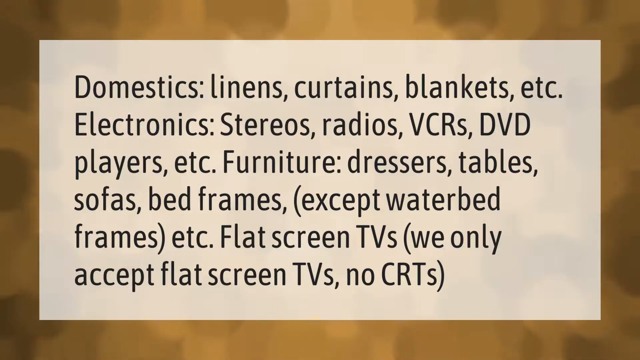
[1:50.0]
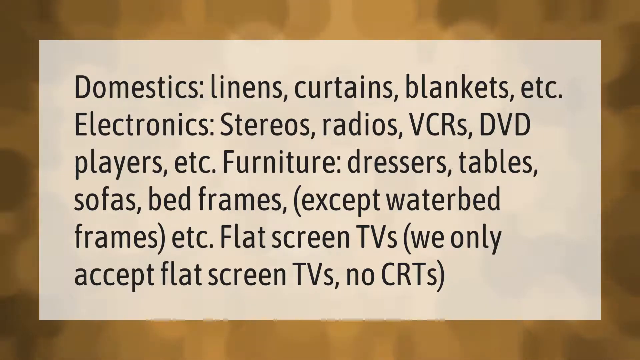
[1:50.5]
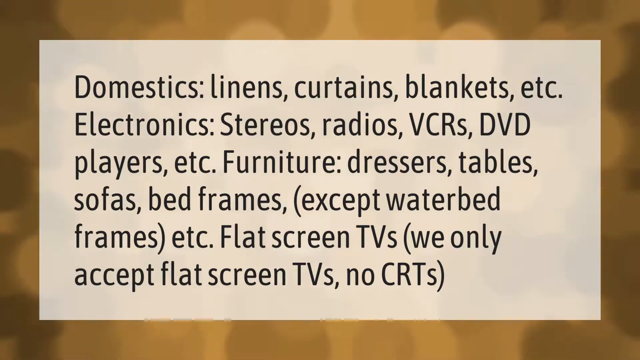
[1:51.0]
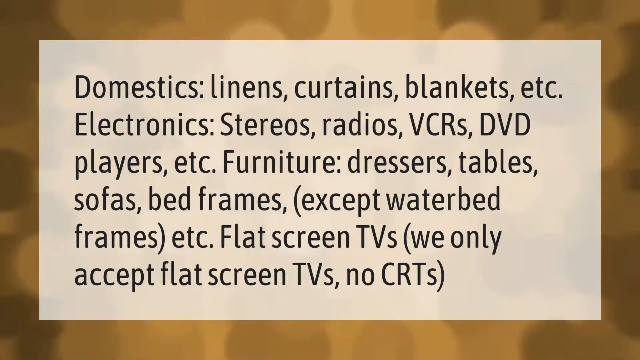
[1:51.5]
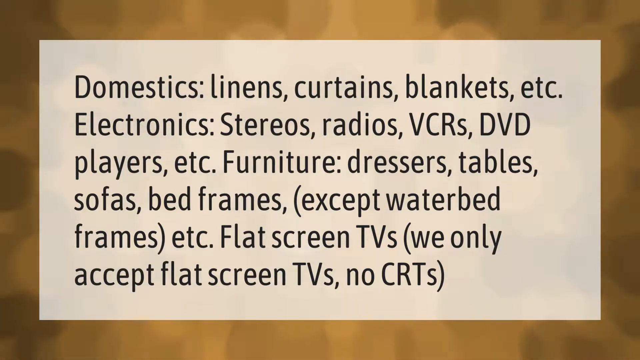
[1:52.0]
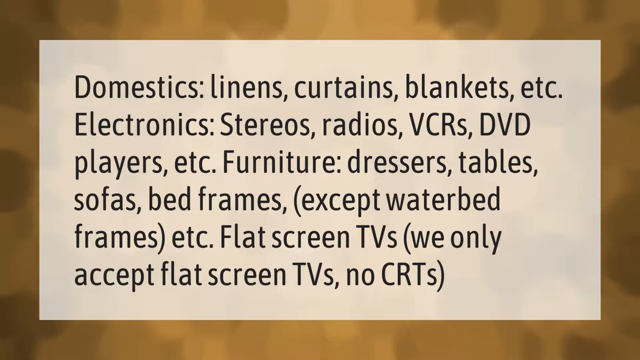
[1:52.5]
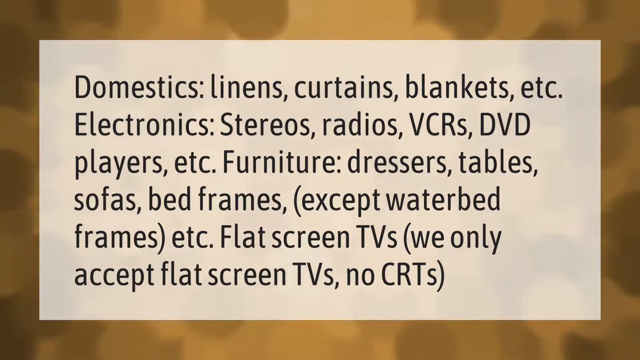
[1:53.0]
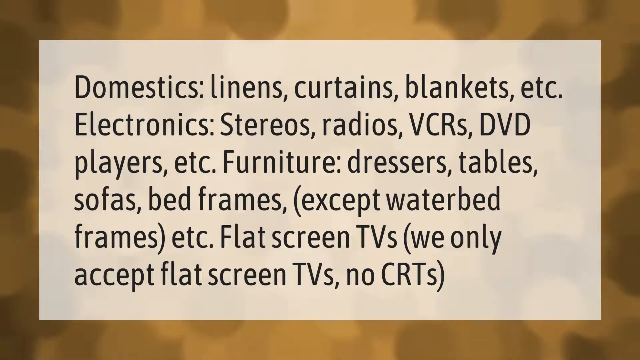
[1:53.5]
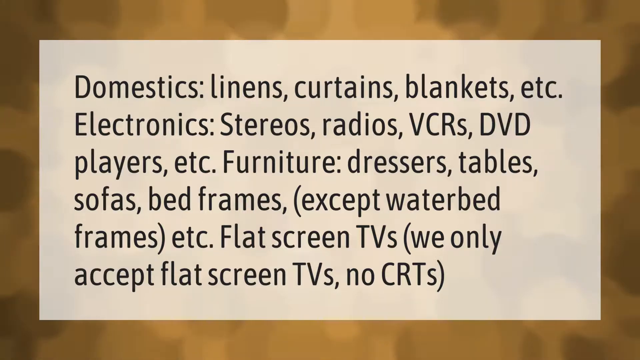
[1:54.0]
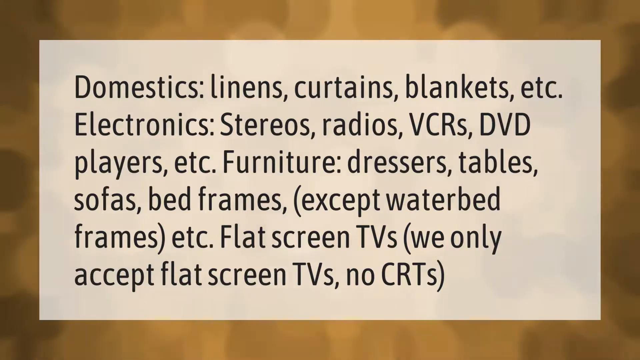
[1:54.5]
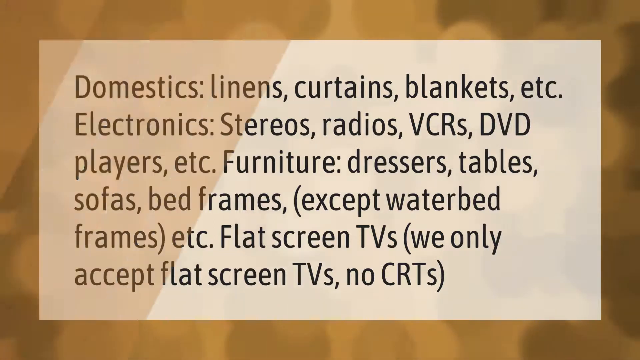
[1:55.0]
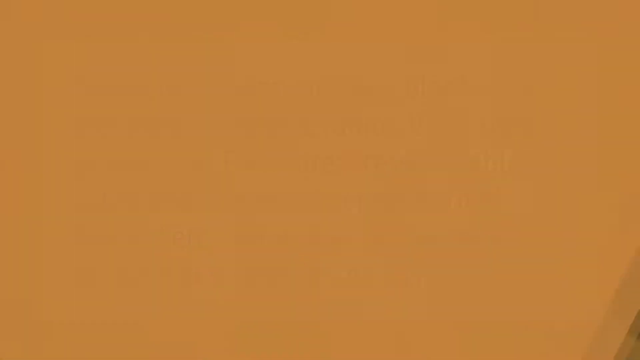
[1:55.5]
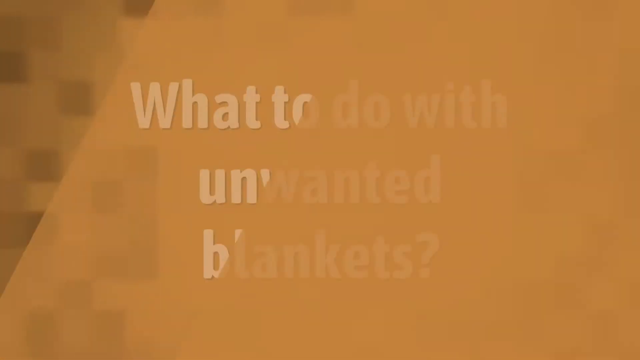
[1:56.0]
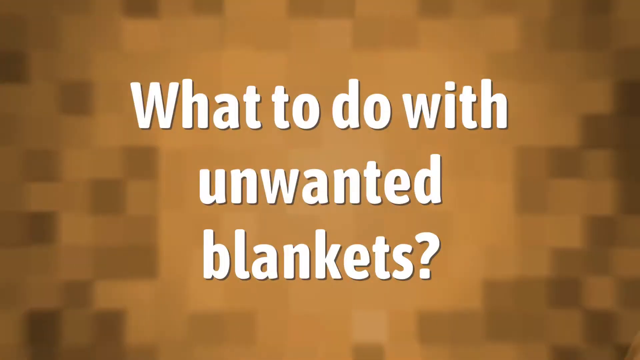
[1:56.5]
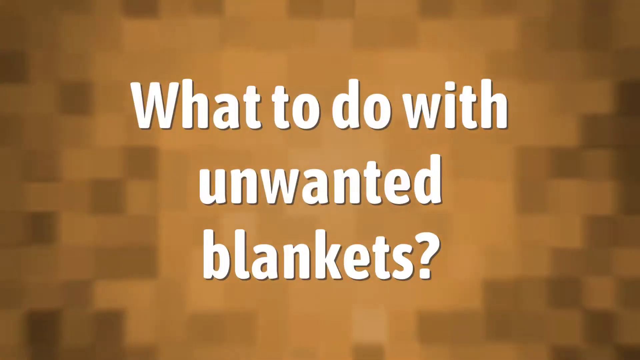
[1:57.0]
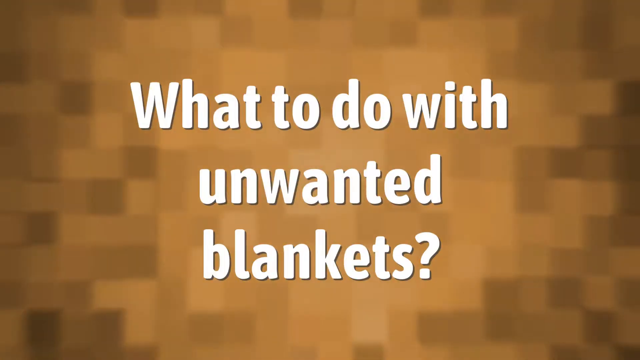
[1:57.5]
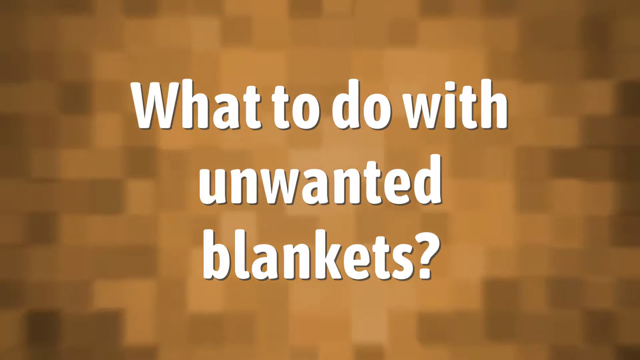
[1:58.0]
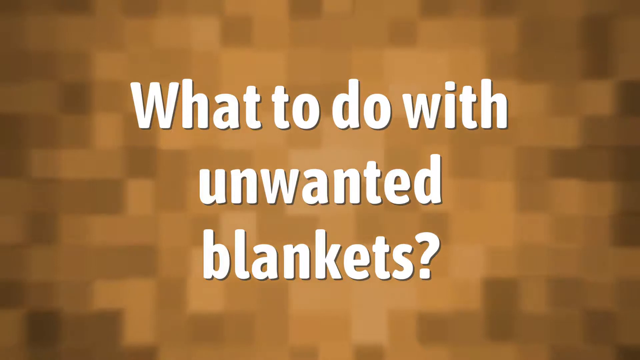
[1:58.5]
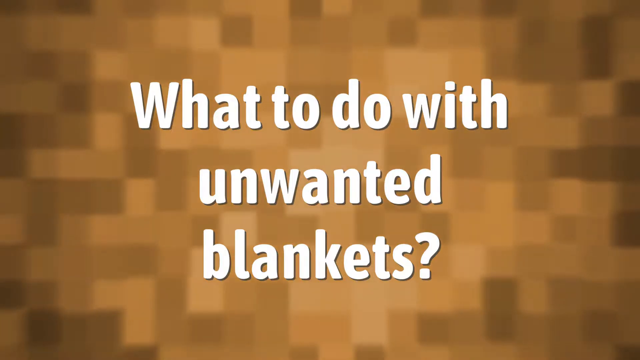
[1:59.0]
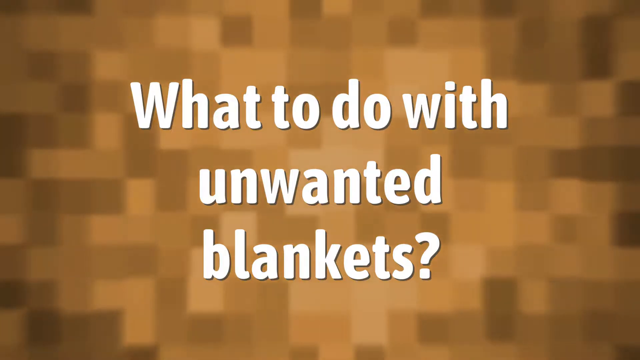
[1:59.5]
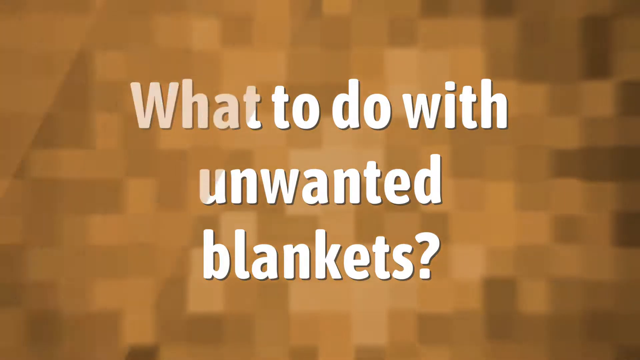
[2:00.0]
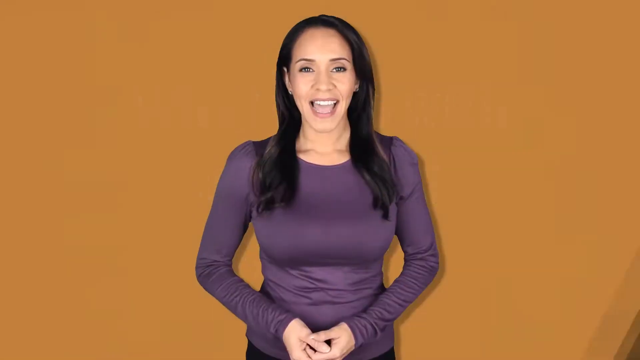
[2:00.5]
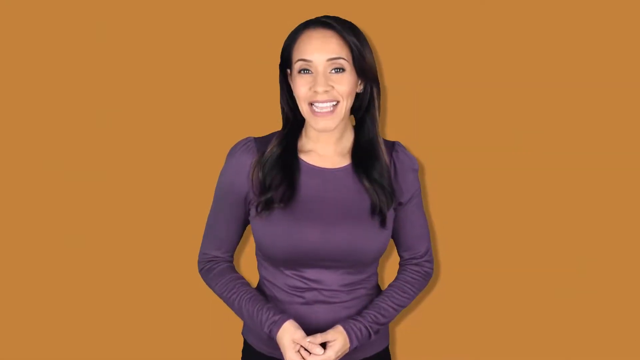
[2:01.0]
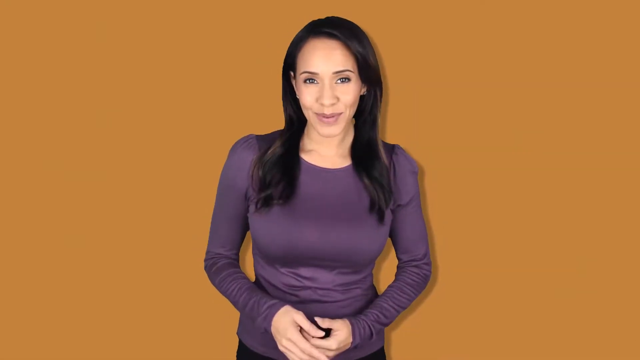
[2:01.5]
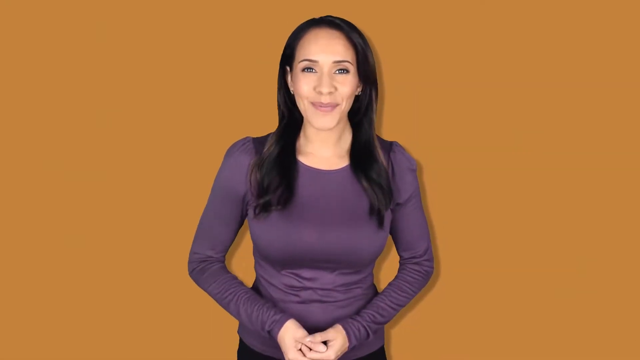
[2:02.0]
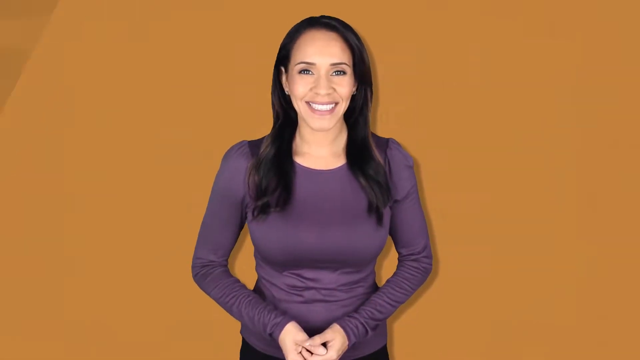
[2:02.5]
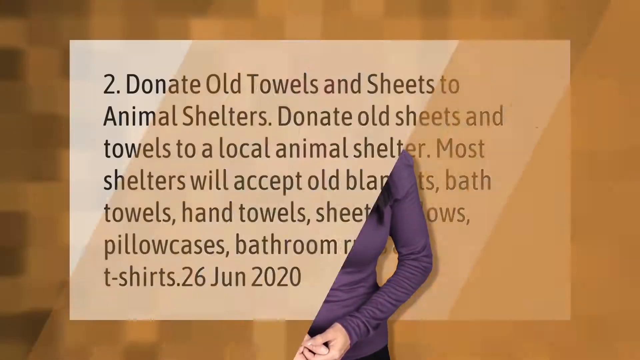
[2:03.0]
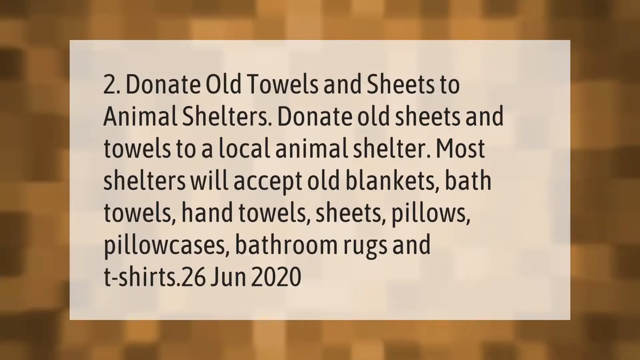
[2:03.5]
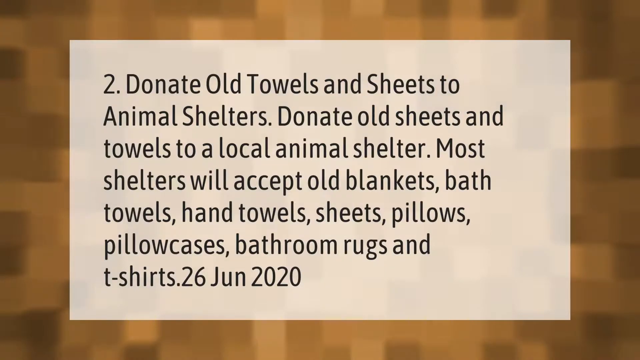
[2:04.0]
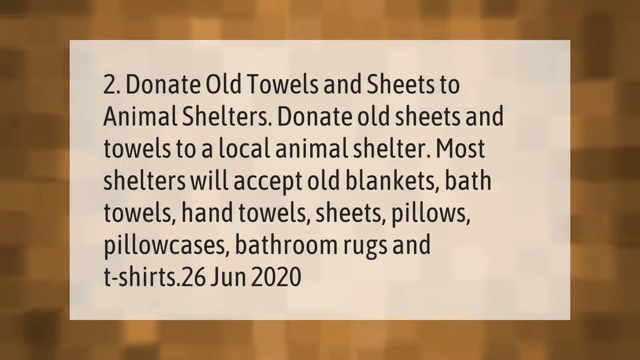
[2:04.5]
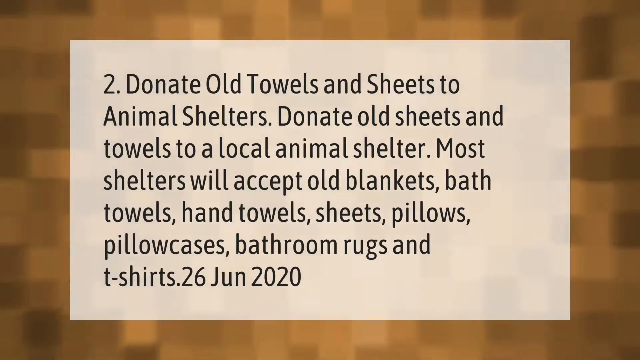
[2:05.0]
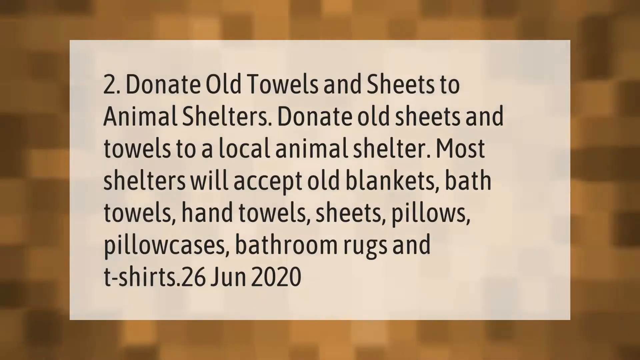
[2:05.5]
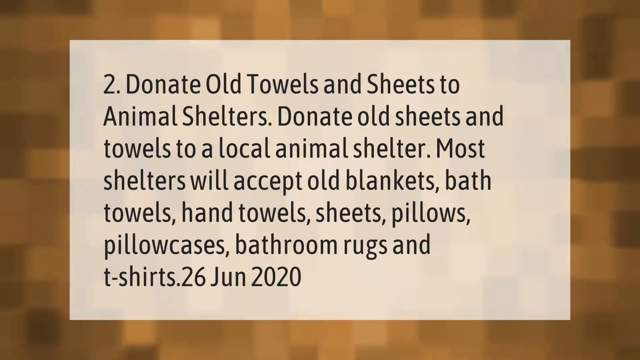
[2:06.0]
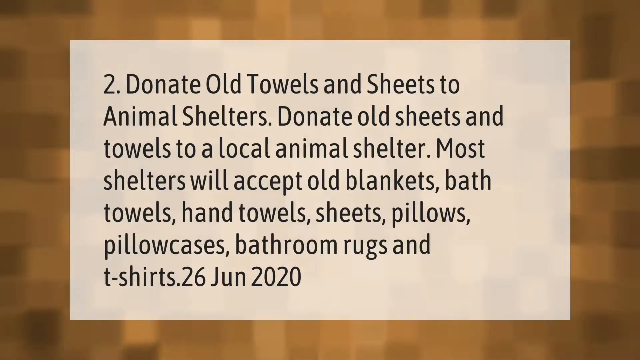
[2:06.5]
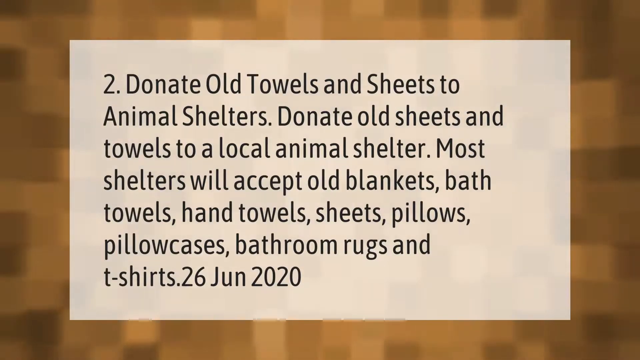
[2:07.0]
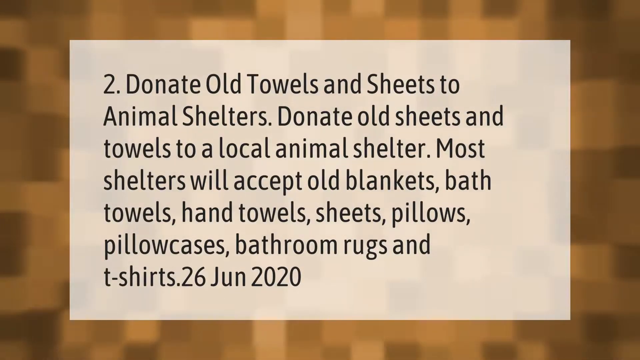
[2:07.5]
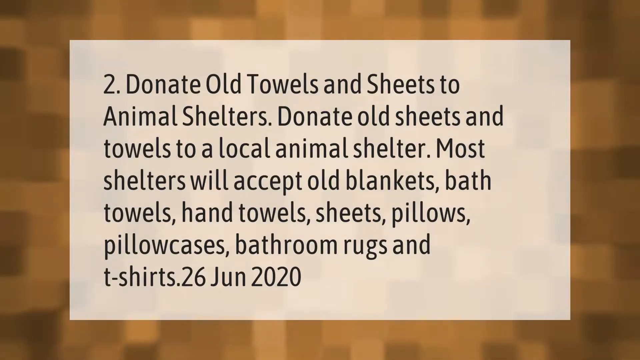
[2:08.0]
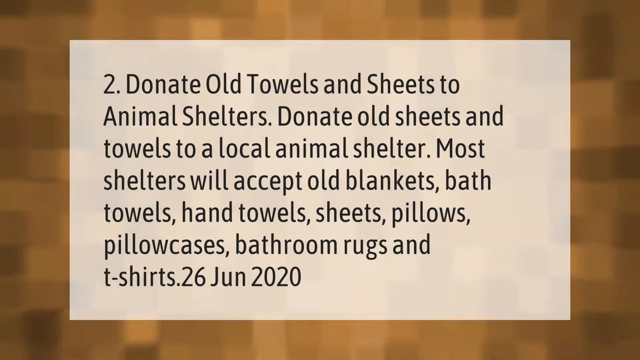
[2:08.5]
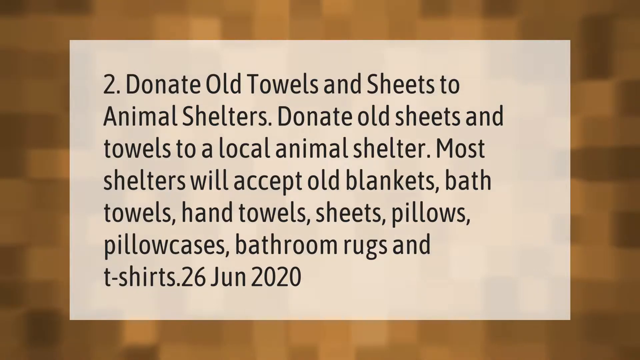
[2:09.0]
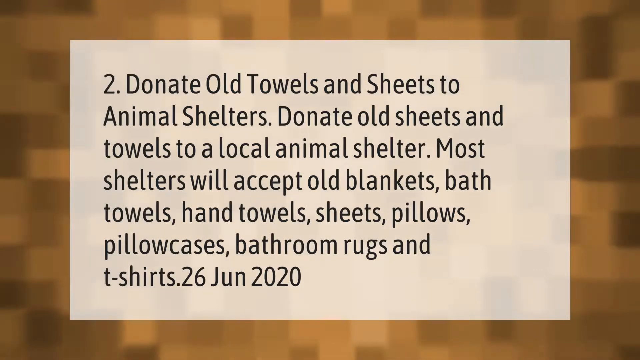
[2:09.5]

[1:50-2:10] Text reads "what to do with unwanted blankets?", then "Two, donate old towels and sheets to animal shelter. Donate old sheets and towels to a local animal shelter. Most shelters will sell old blankets, bath towels, hand towels, sheets, pillows, pillowcase, bathroom rugs, and t-shirts.", with the date June 26, 2020. The words are black on a brown background. The lady in the purple shirt talks for a couple of seconds, and then the video moves to a different scene.